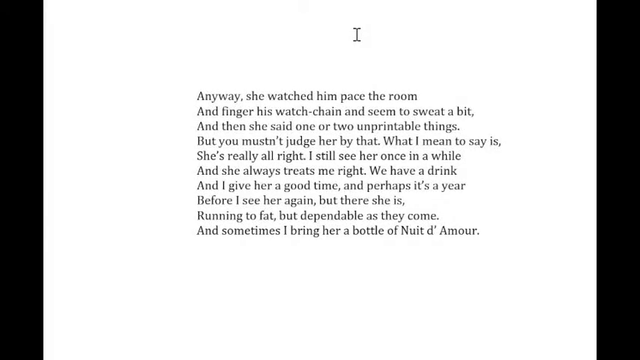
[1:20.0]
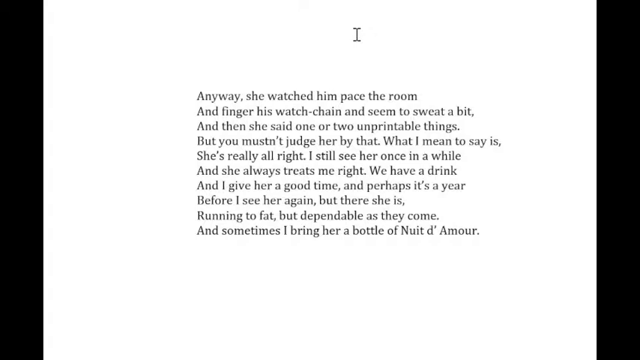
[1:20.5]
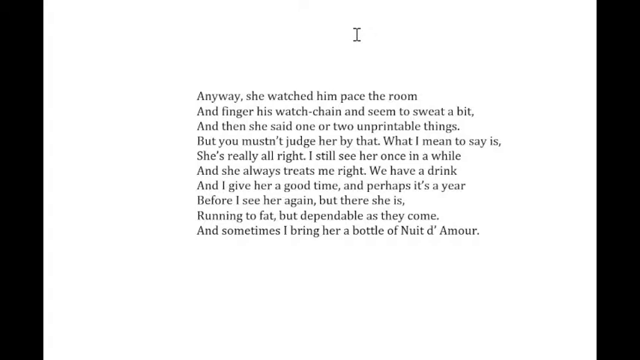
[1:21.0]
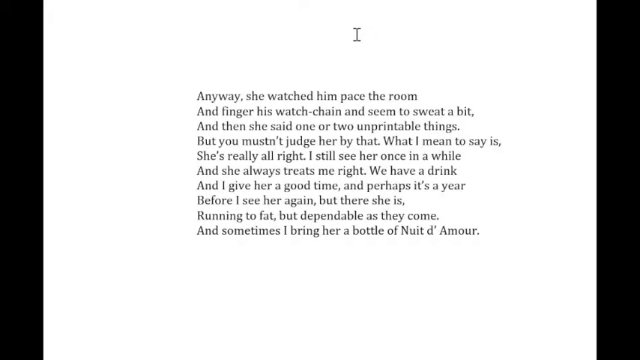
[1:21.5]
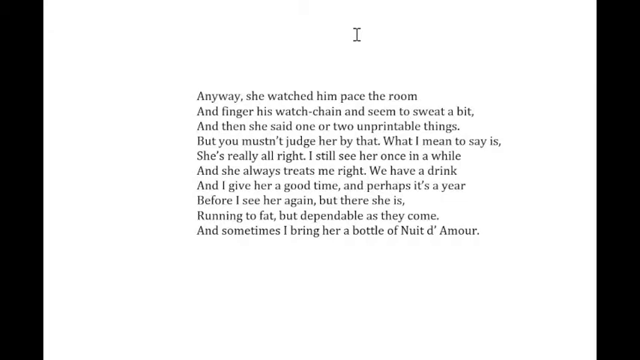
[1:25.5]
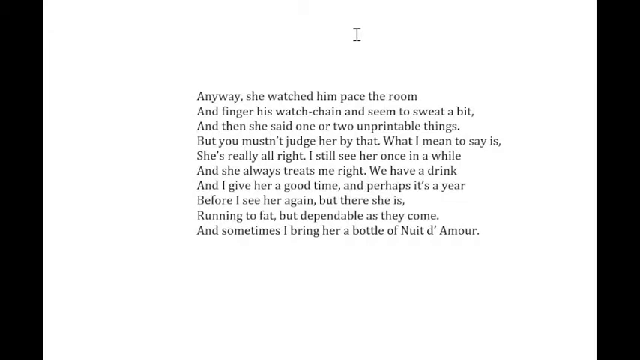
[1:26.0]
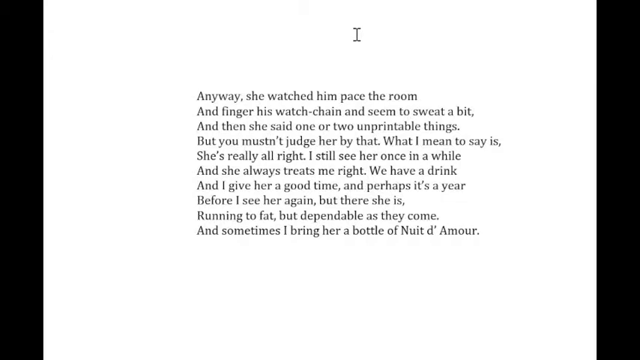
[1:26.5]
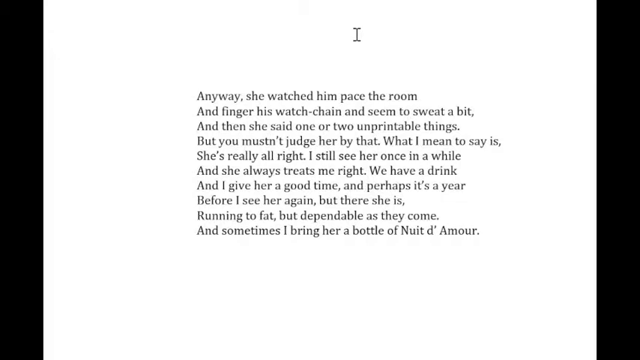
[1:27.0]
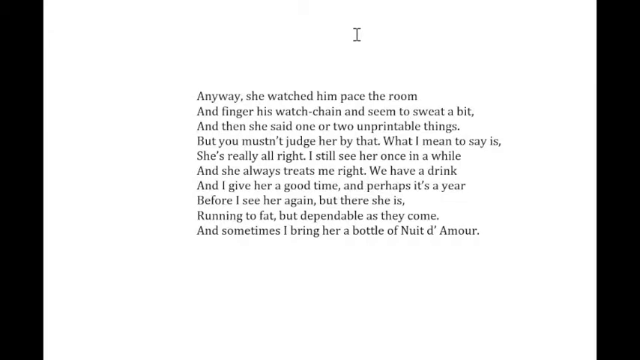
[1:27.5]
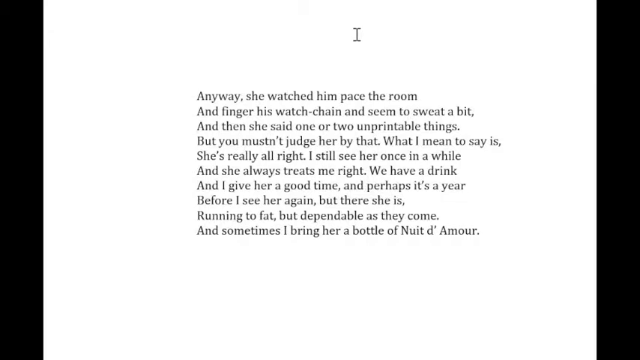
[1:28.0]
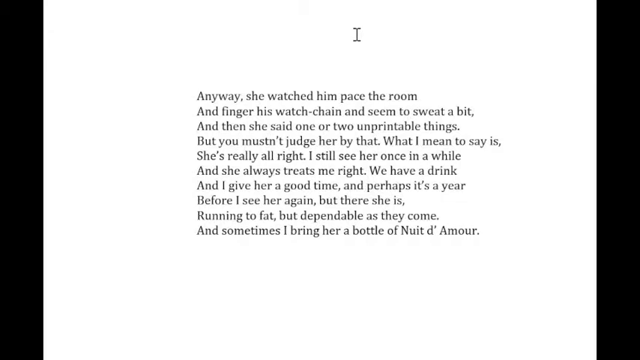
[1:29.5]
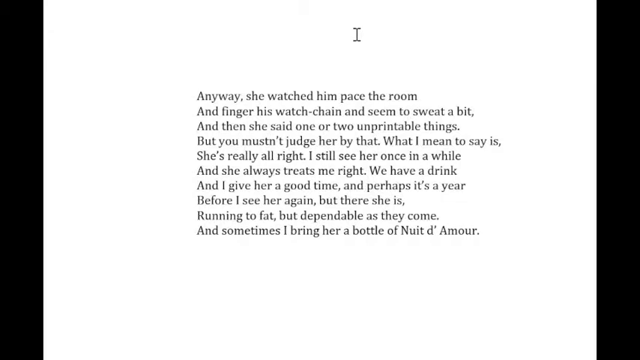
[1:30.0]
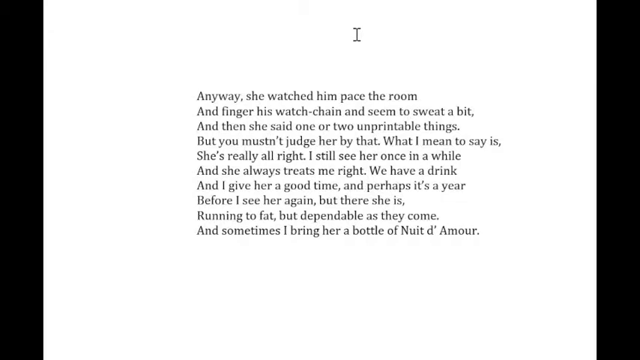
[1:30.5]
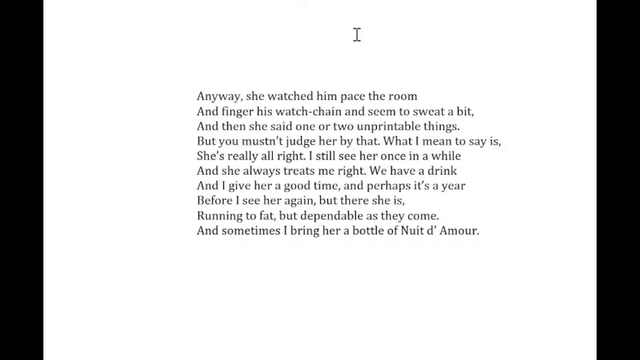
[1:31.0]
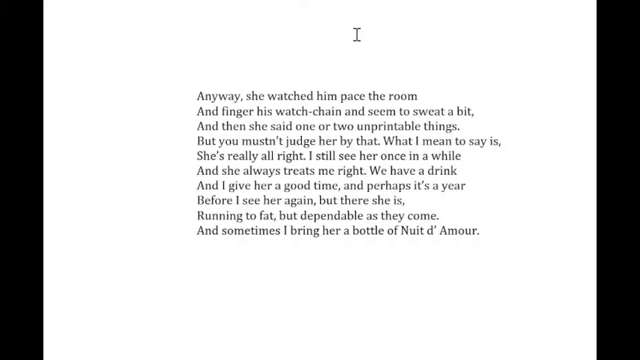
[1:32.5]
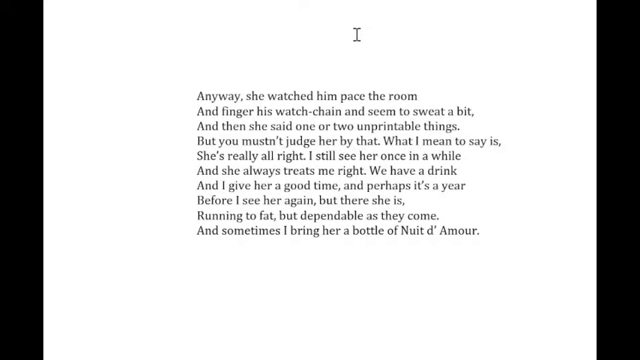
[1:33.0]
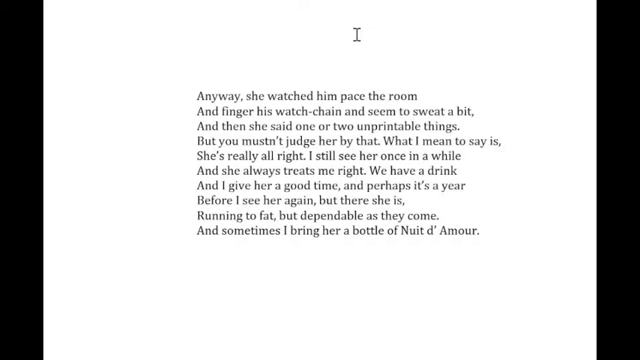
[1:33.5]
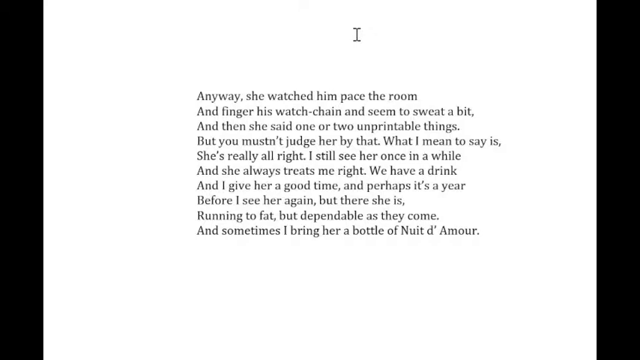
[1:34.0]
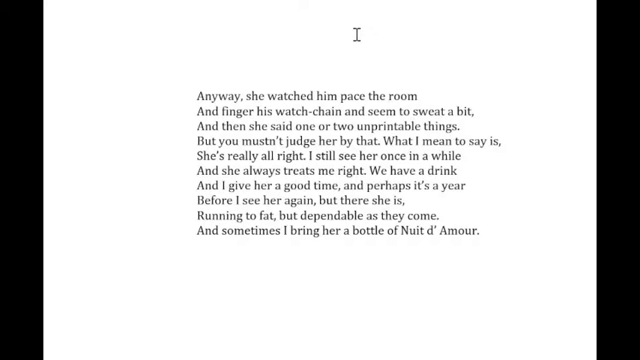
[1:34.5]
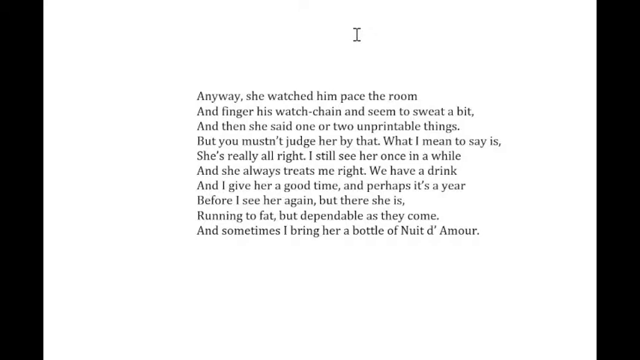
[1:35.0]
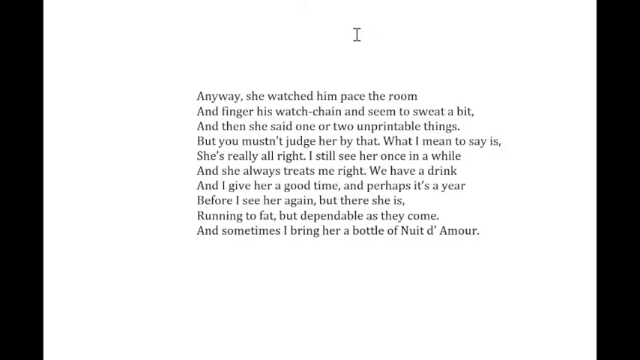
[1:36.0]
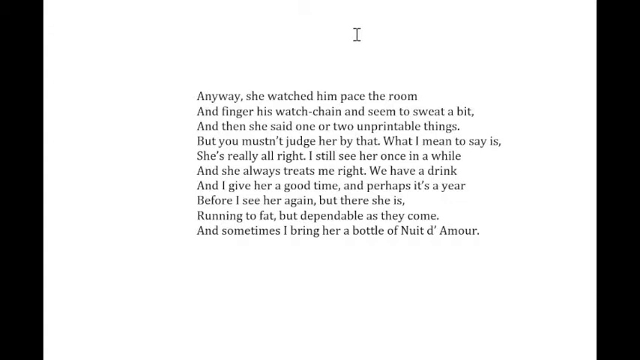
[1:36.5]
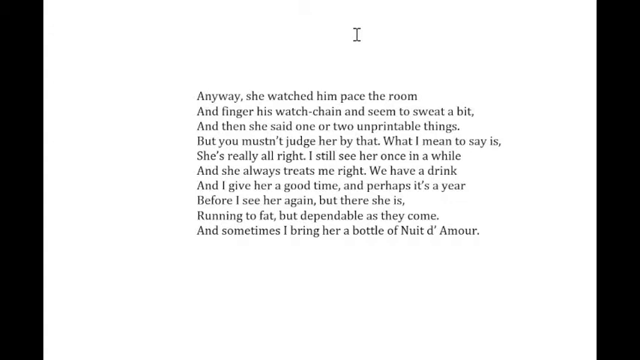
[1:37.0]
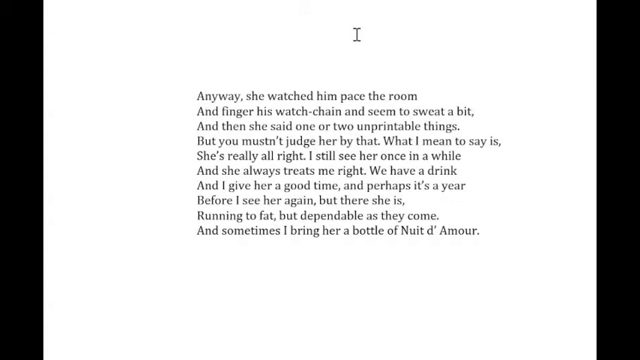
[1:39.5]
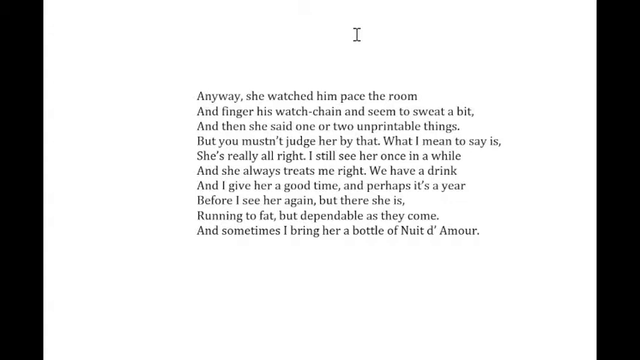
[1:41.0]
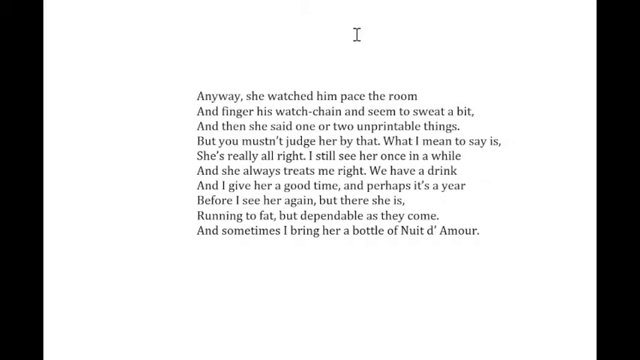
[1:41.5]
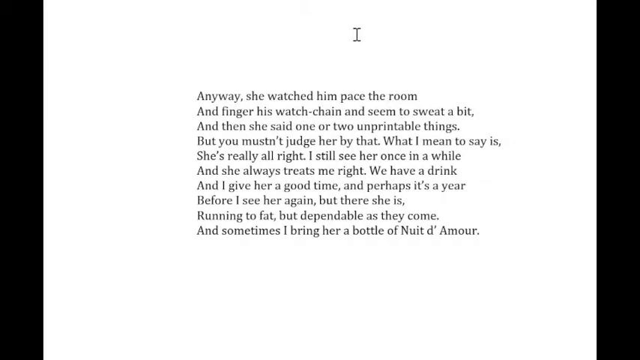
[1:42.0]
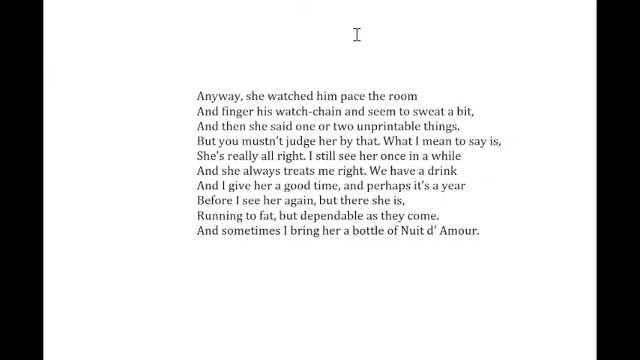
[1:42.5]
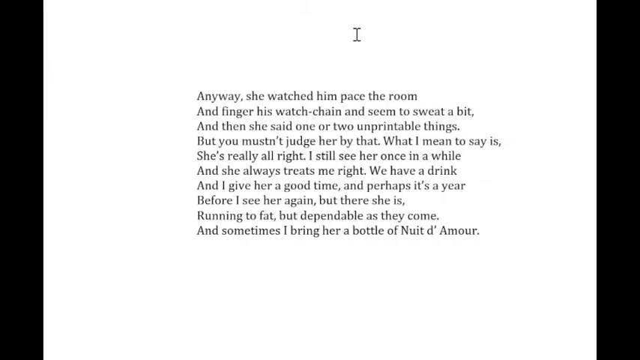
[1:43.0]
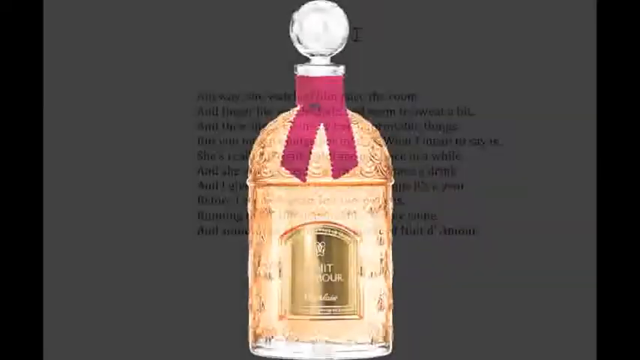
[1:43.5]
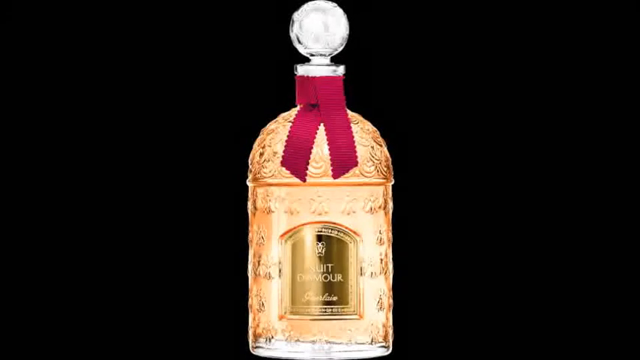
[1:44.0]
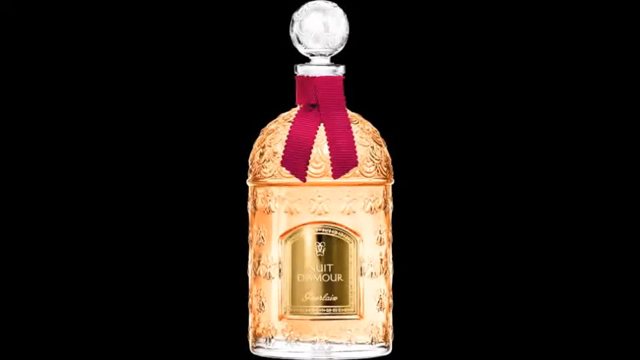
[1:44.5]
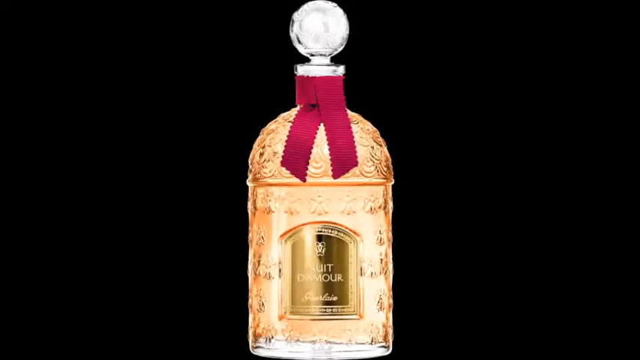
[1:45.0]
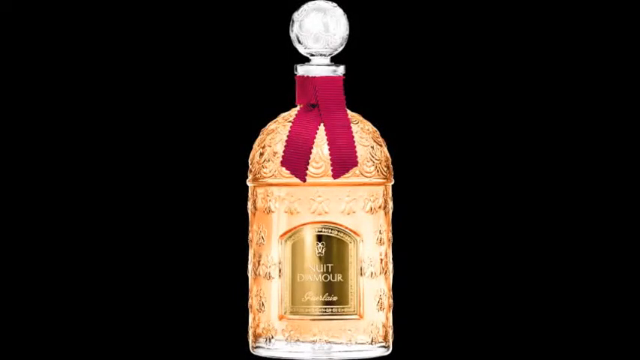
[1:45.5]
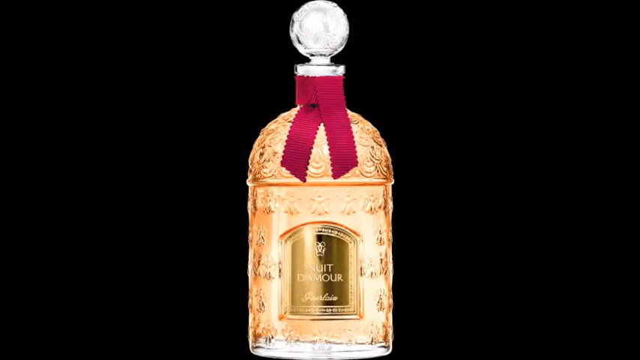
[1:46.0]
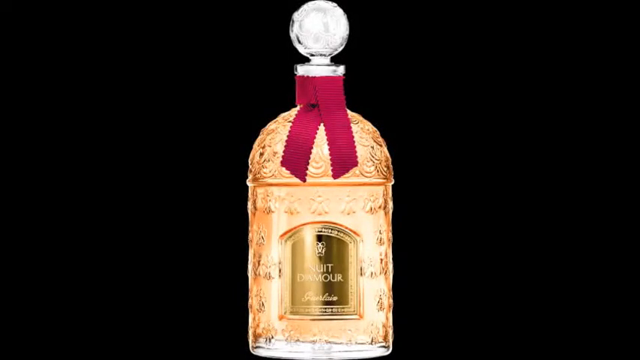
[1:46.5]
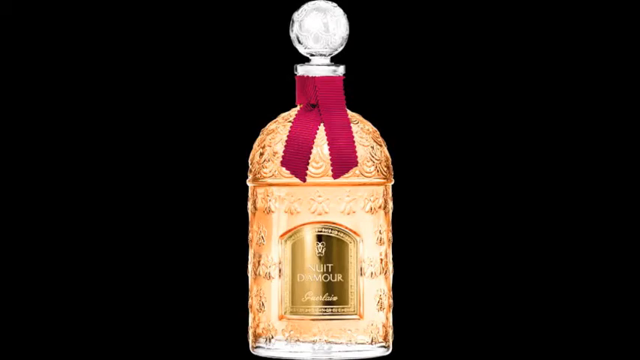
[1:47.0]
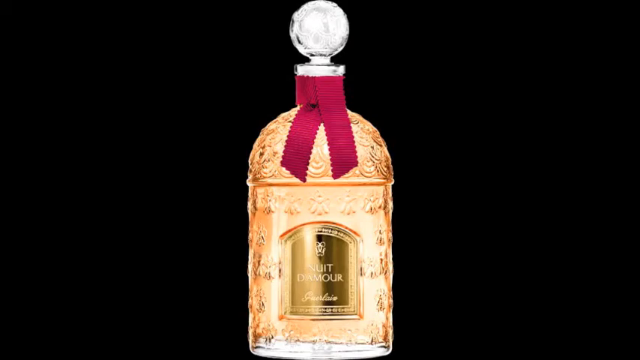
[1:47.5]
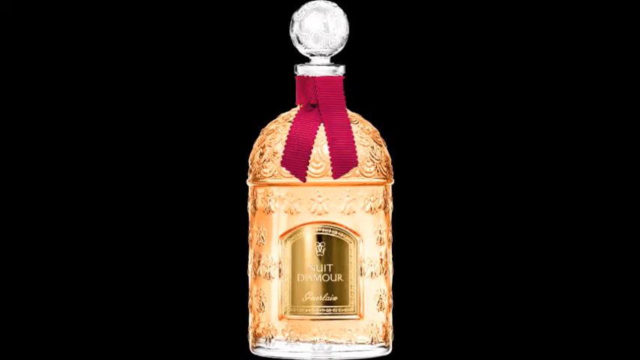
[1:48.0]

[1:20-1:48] There do not seem to be any quotation marks on this page. "Watch chain" is split across two lines with a hyphen between, and the text says "mustn't". The first three lines look like one long sentence ending with a period after "unfavorable things", and the next line also ends with a period. The following line ends with "all right" and a period. "I still see her once in a while" runs from the fifth line into the sixth, "she always treats me right" ends with a period, a sentence continues down to a period after "dependable as they come", and the last line runs as one line ending with "nuit de amour" and a period. The view then moves from the white document to something in color, with black, showing the words "nuit de amour" on what looks like a gold arc-like stamp. An old-looking bottle, almost like liquor, has a glow at the top, apparently for the bottle opener, and goes down to a pedestal. Two maroon ribbons come down, and a crinkle-cut, wavy border surrounds it. Round, curved lines appear on the dome part of the body. It is like an engraving of the nuit de amour, and it is signed below, but the signature is hard to read.